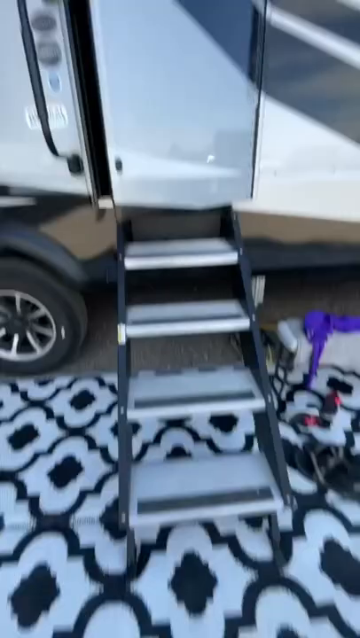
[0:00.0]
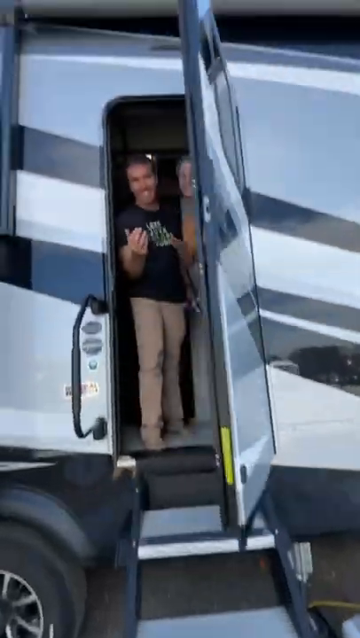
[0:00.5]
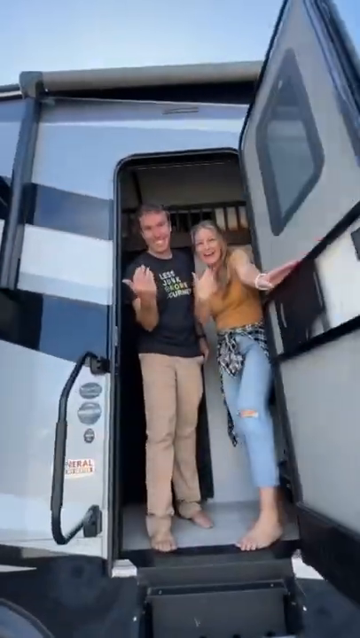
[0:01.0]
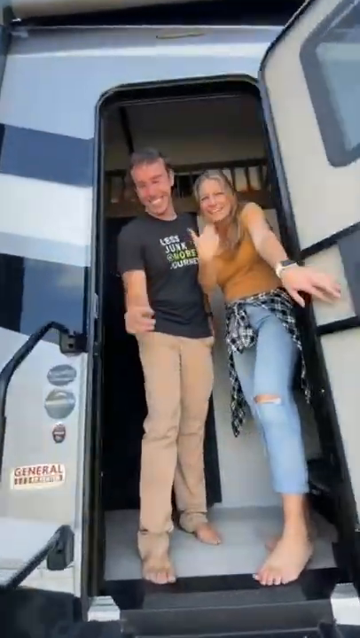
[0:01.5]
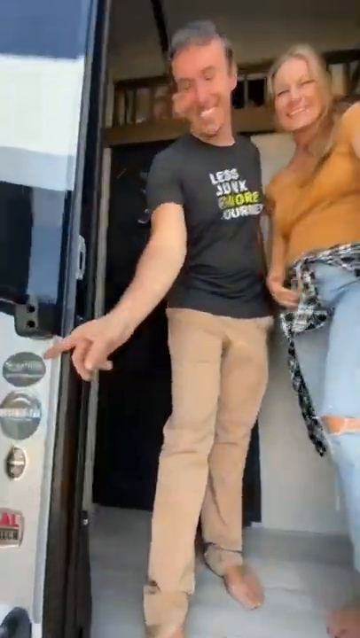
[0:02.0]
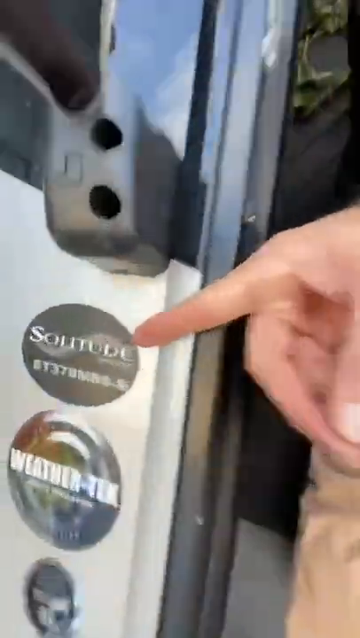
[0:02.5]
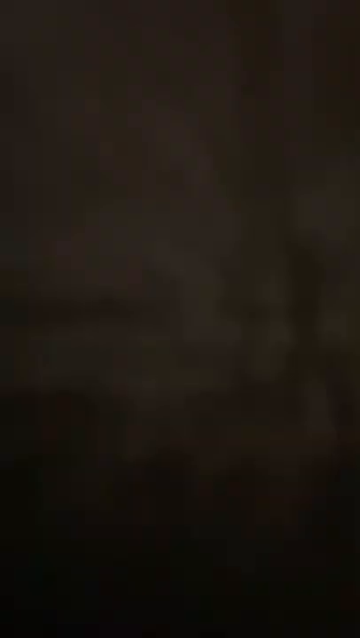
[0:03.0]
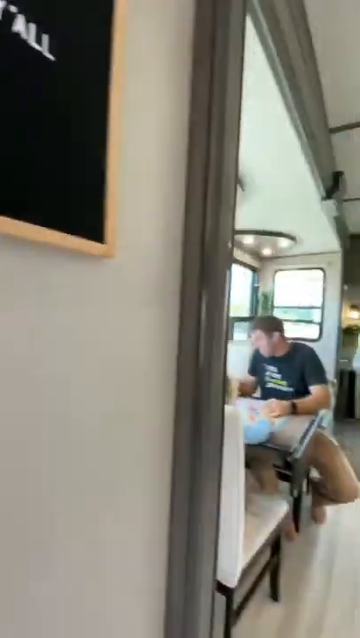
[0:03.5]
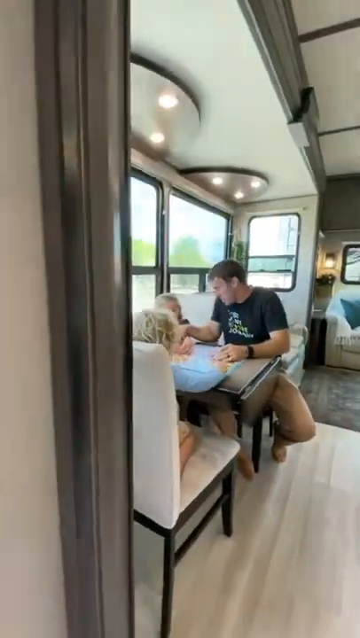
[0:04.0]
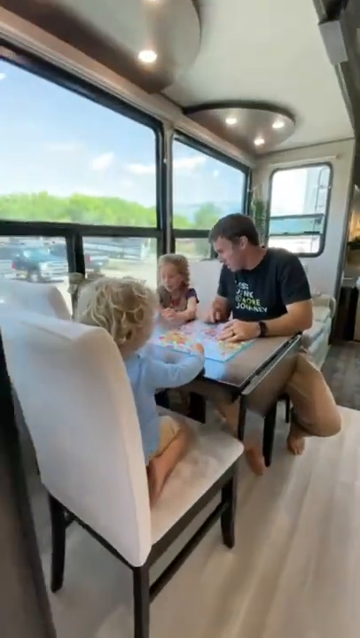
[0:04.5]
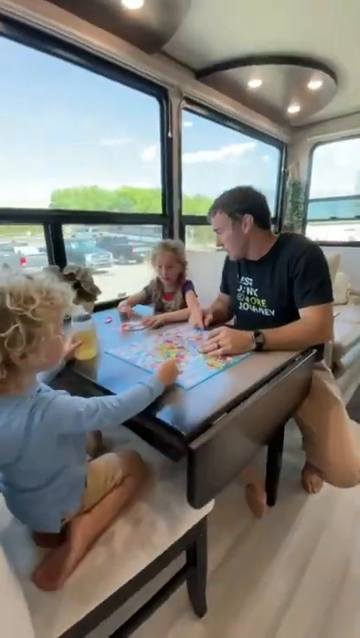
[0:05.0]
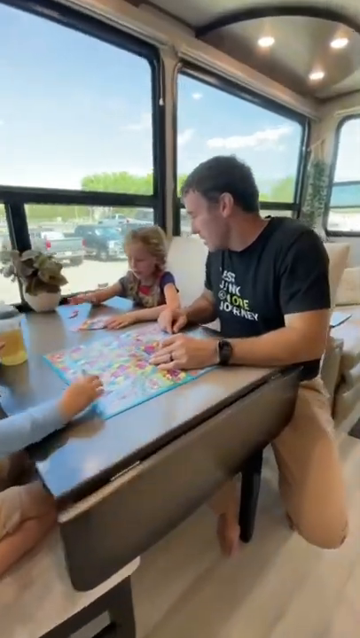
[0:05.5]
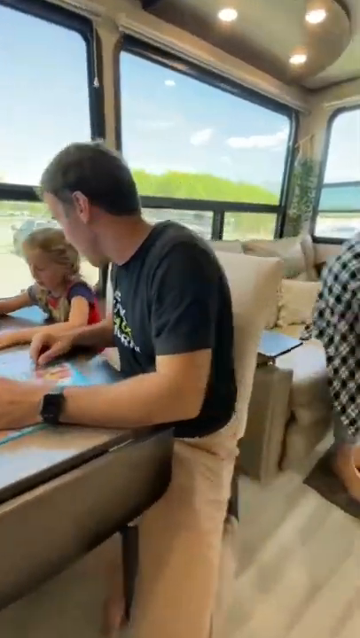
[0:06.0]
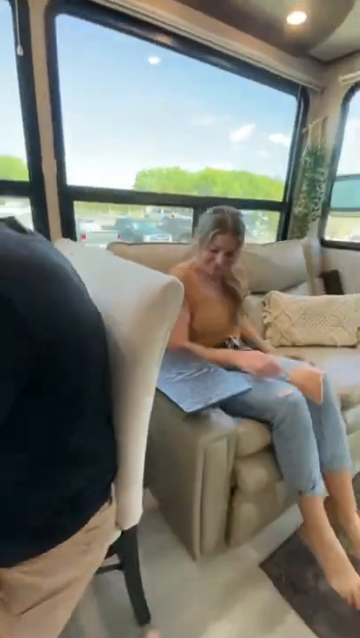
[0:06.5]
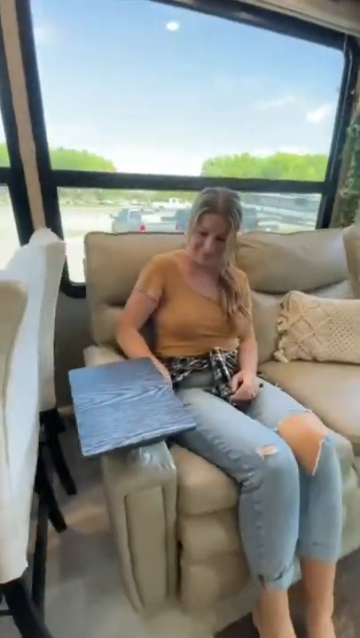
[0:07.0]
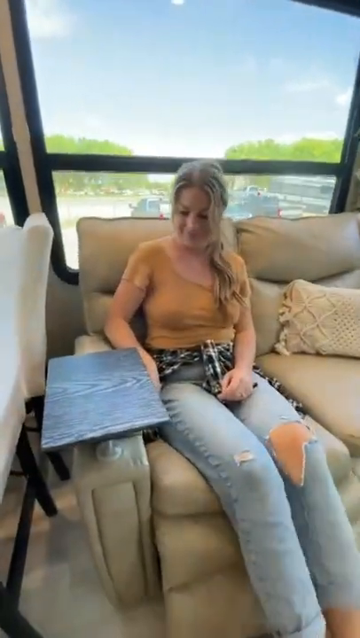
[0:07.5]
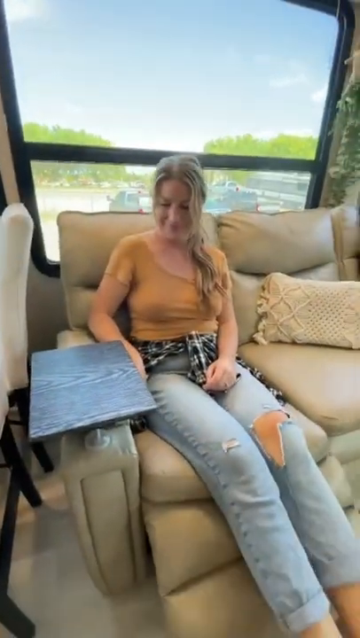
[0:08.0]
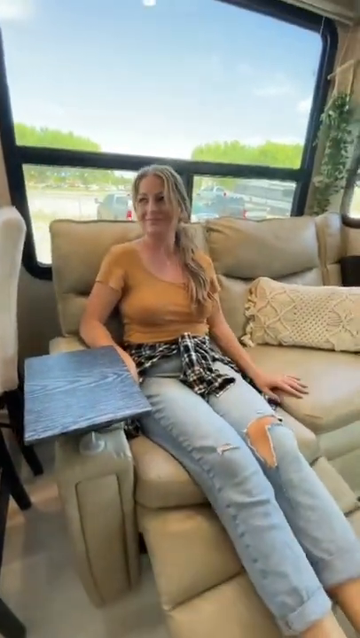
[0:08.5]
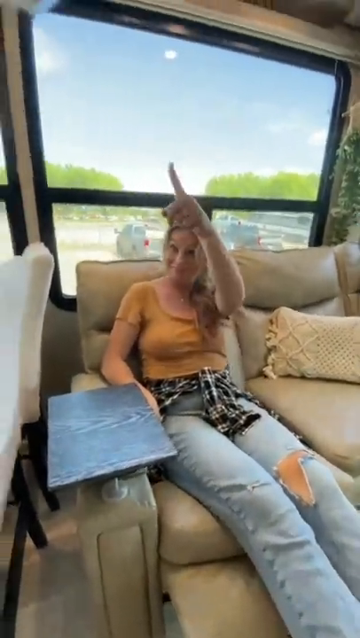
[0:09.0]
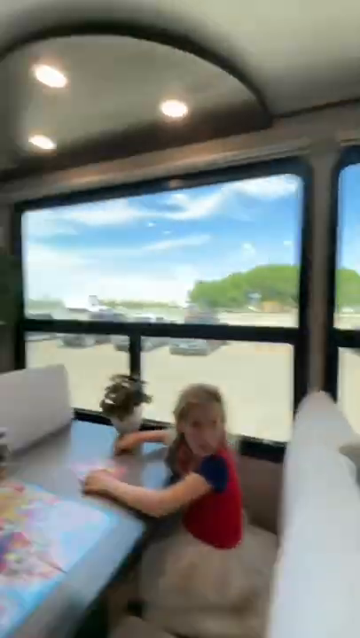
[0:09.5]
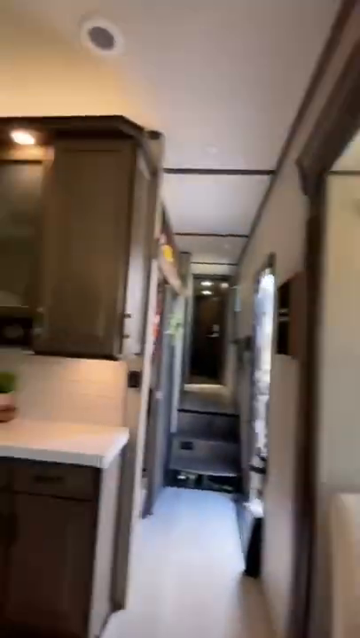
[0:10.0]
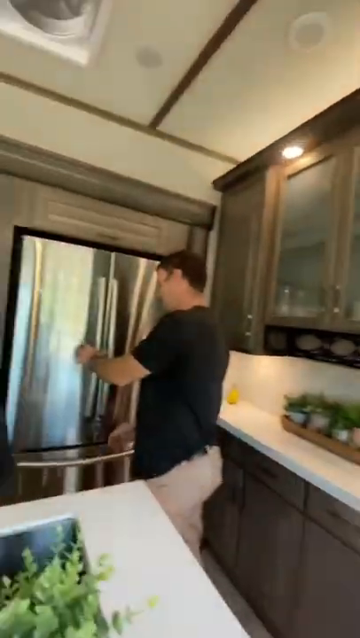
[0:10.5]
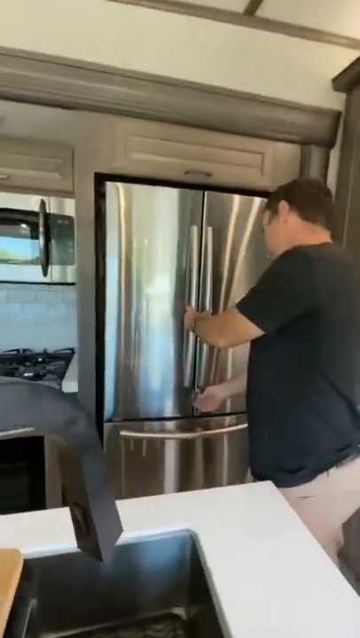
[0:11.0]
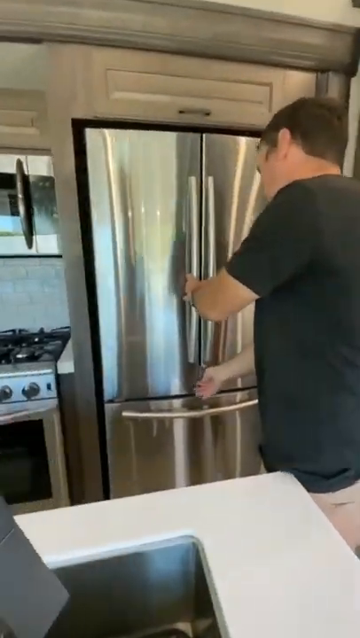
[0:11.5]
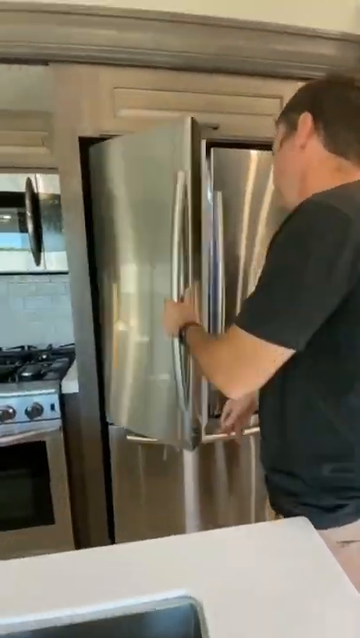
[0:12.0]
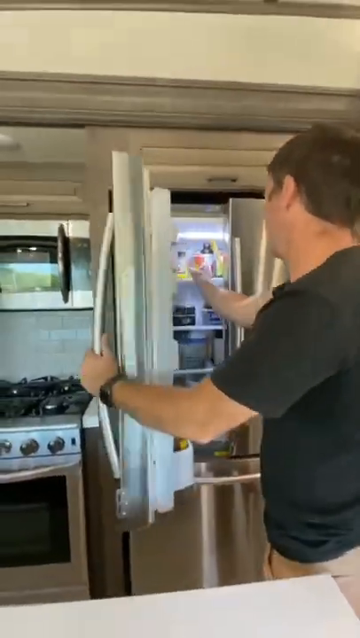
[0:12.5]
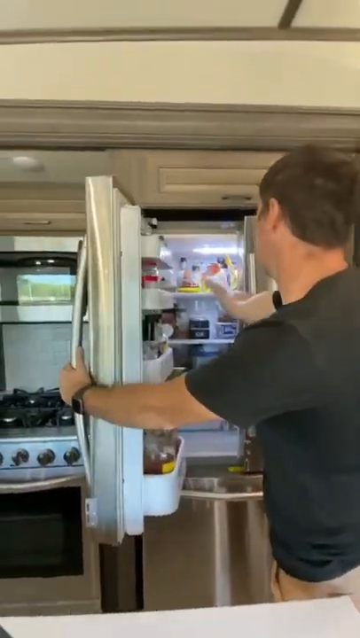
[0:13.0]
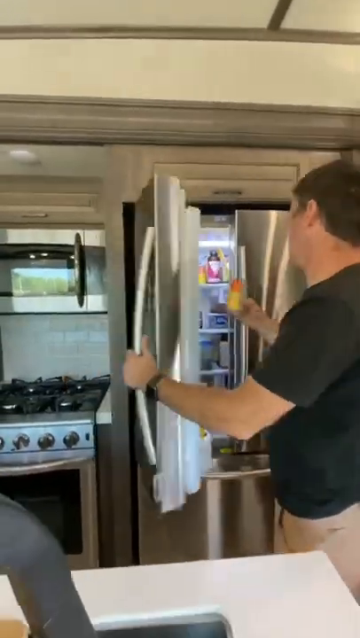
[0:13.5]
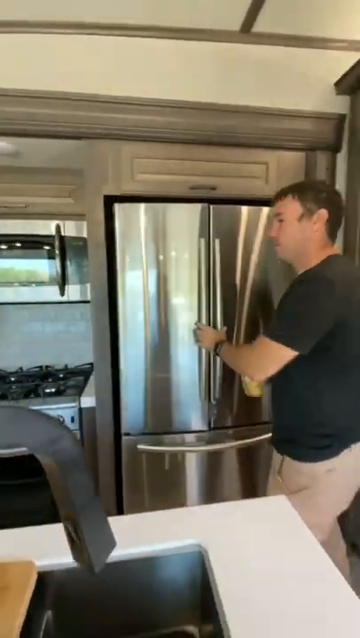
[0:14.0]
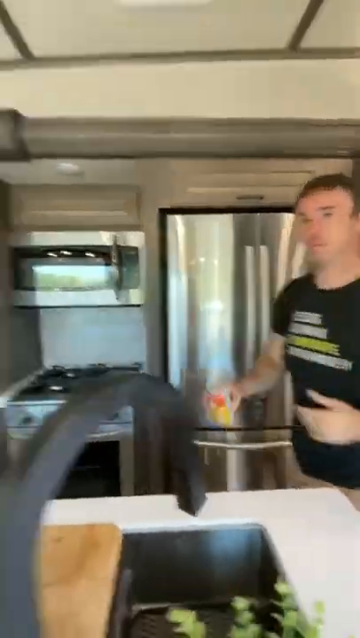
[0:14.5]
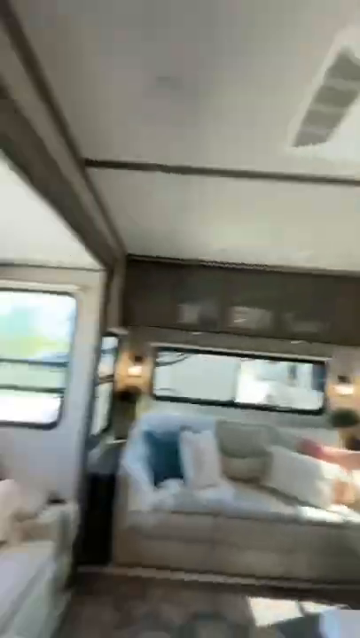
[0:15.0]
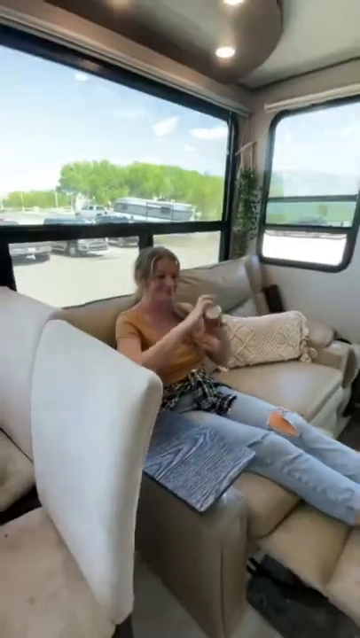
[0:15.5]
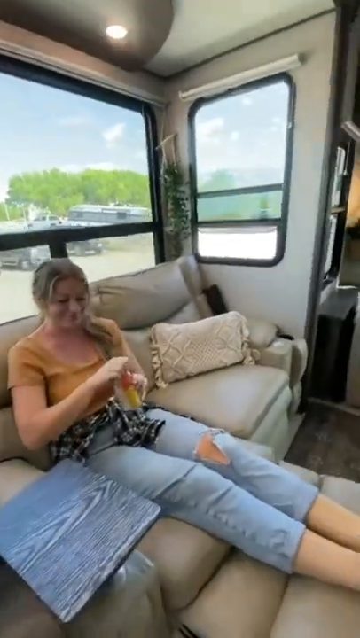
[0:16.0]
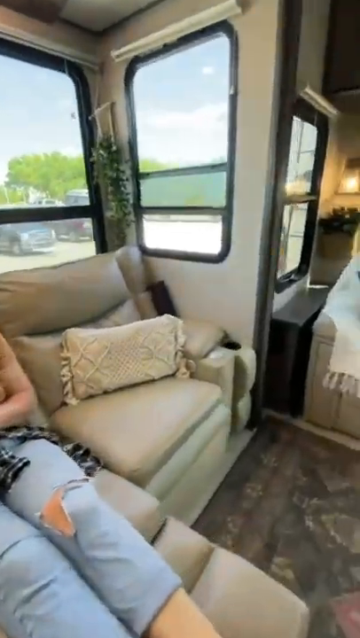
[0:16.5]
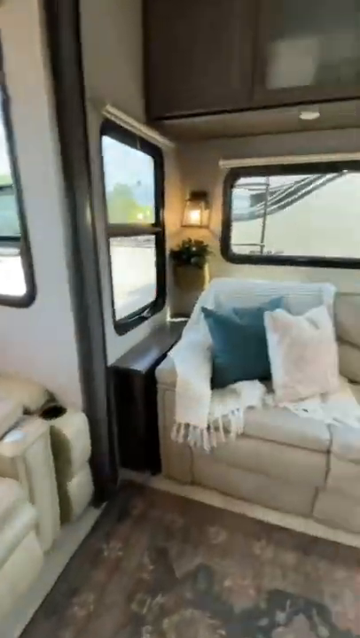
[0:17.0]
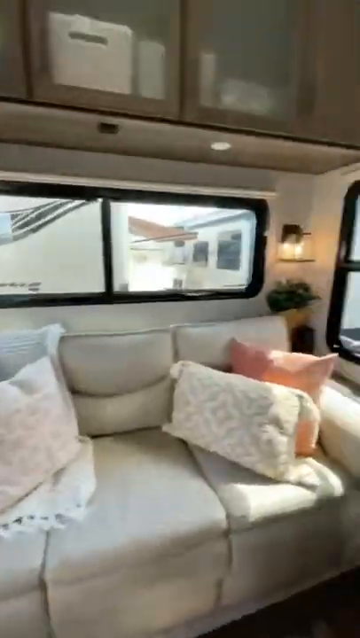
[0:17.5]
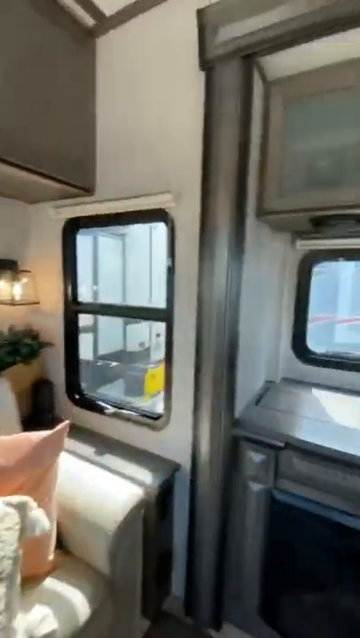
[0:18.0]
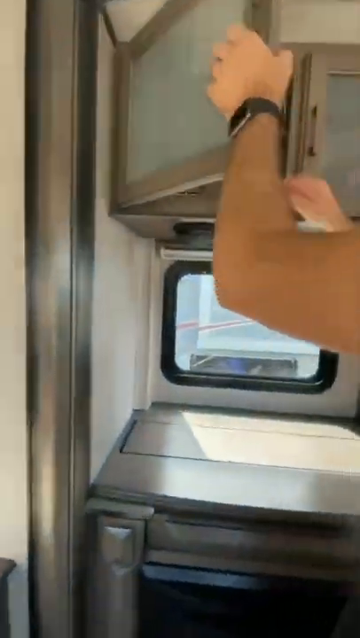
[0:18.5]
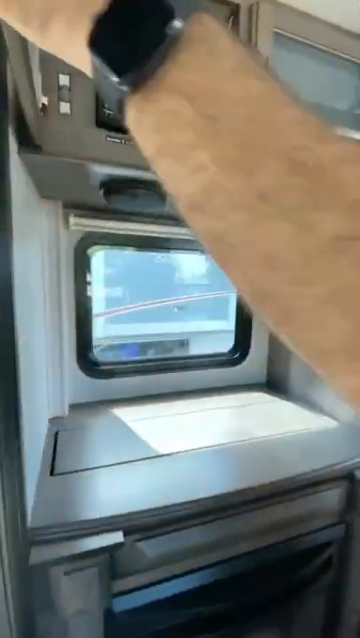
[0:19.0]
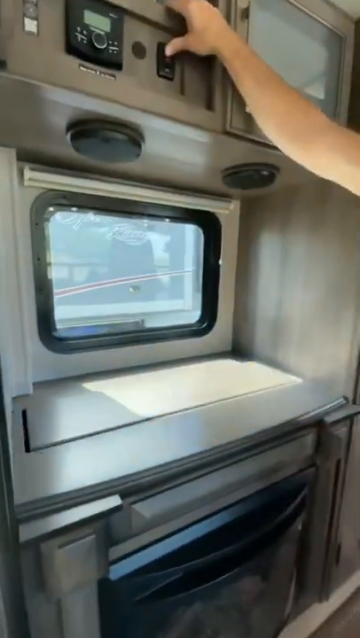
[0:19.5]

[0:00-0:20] A couple opens the door of their camper, and the camera comes inside to show the interior. People are sitting down, and the refrigerator is shown, along with a couch and resting areas. The name Solitude appears, possibly the name of the camper. The young couple has a couple of kids inside, who are sitting at the table relaxing. There is a recliner; she hits a button and her feet go up. The stainless steel refrigerator appears to have catches on the door. Some of the features are shown, including little steps that come up to the camper. Through the windows it is a sunny day with blue skies and clouds, and there is some tree vegetation. It is unclear whether any other campers are around, though possibly one is in the background.